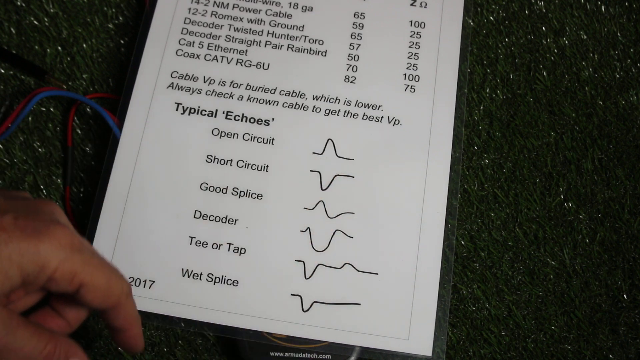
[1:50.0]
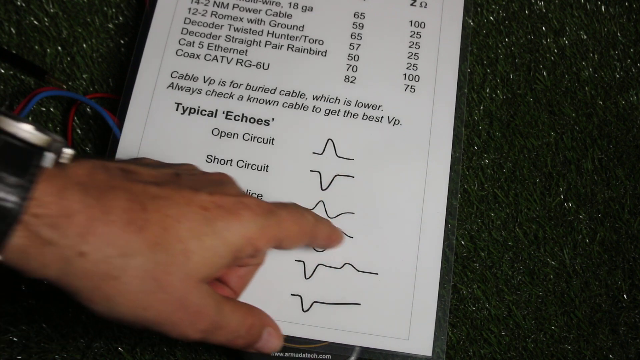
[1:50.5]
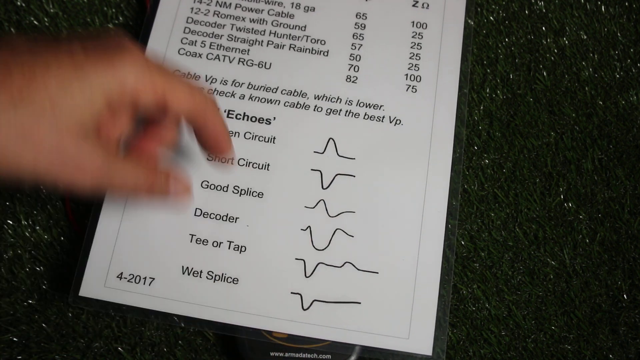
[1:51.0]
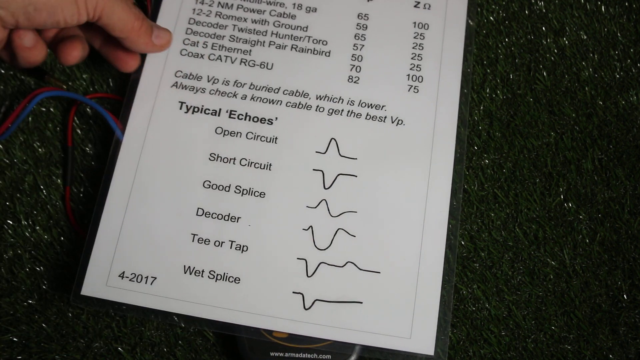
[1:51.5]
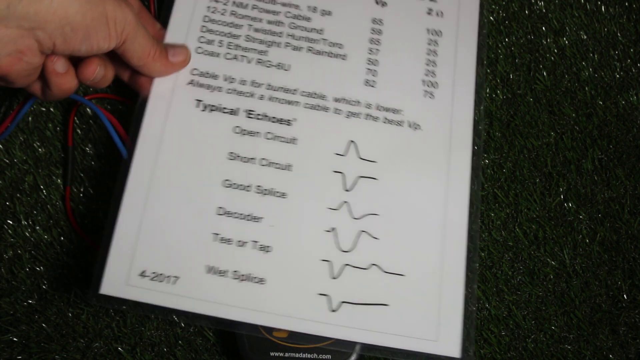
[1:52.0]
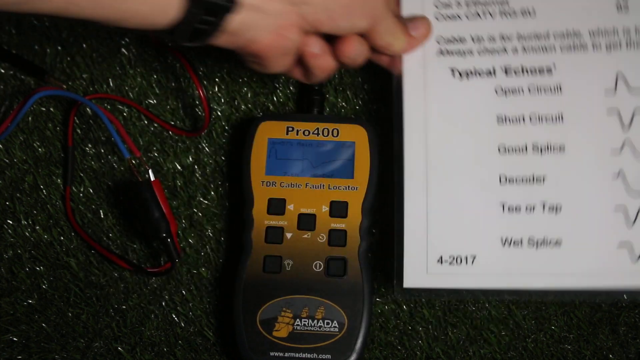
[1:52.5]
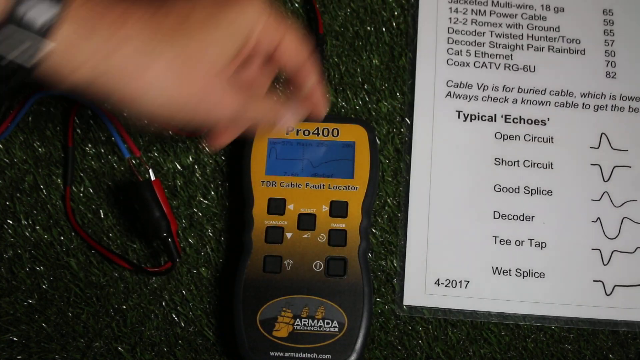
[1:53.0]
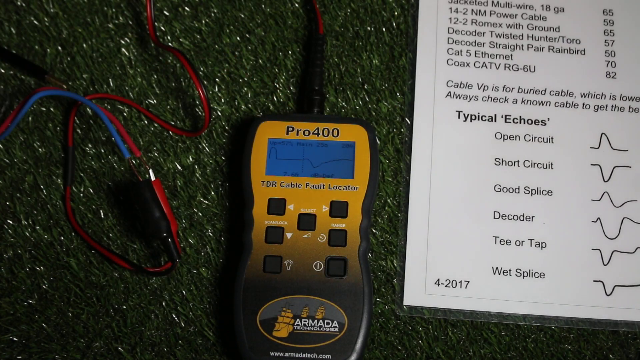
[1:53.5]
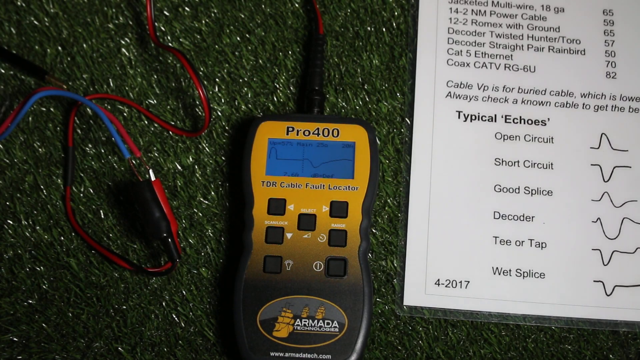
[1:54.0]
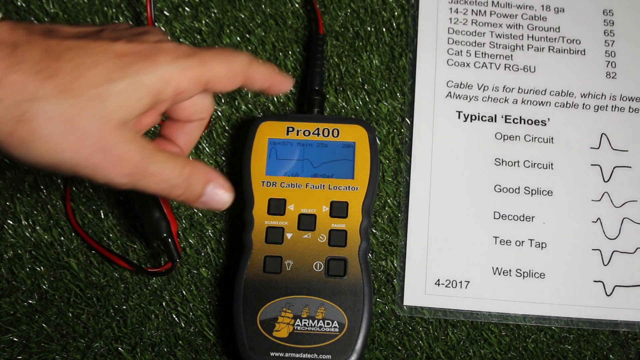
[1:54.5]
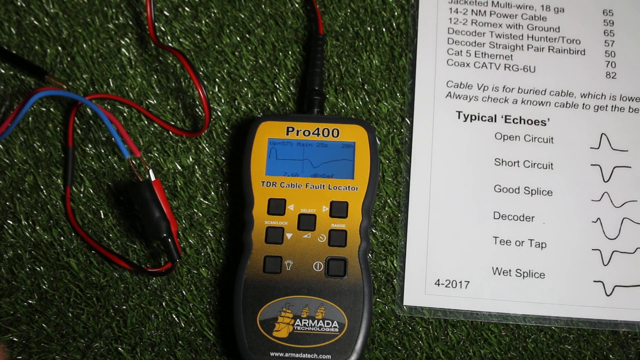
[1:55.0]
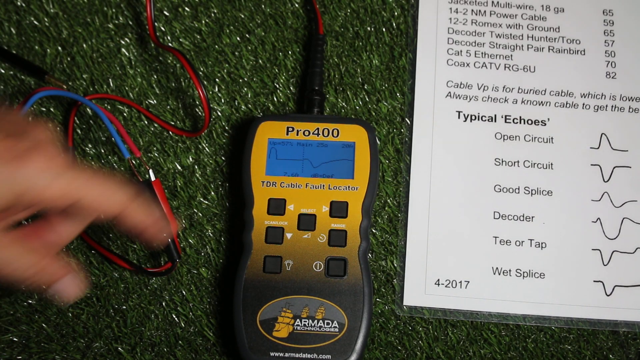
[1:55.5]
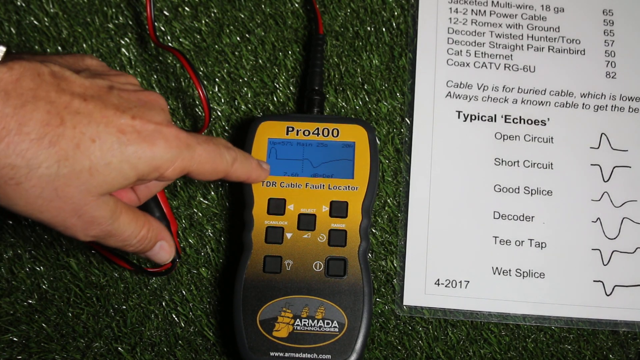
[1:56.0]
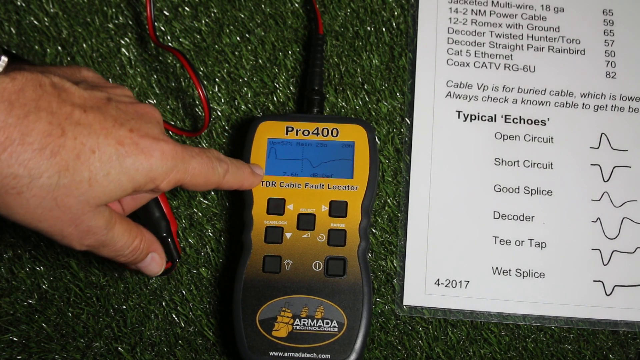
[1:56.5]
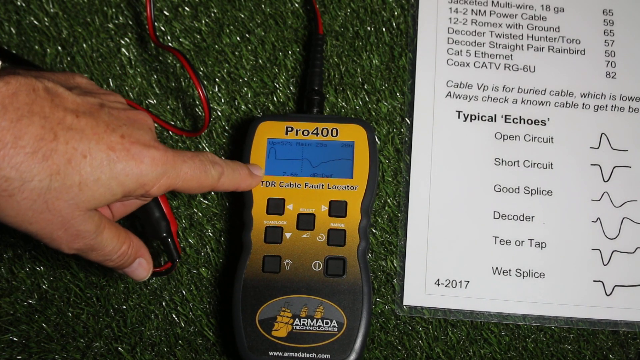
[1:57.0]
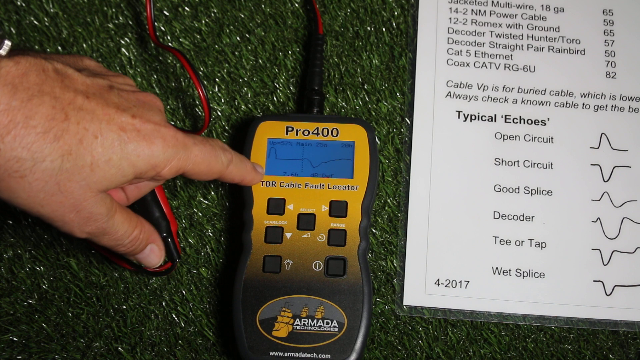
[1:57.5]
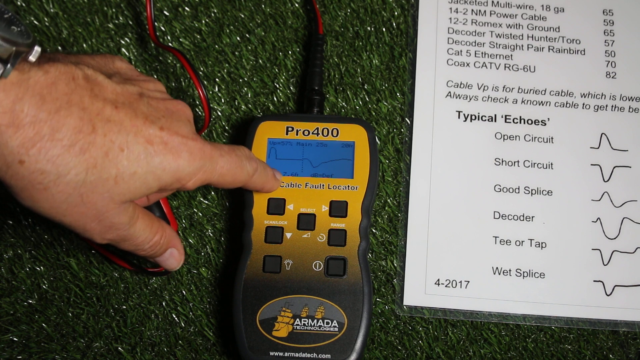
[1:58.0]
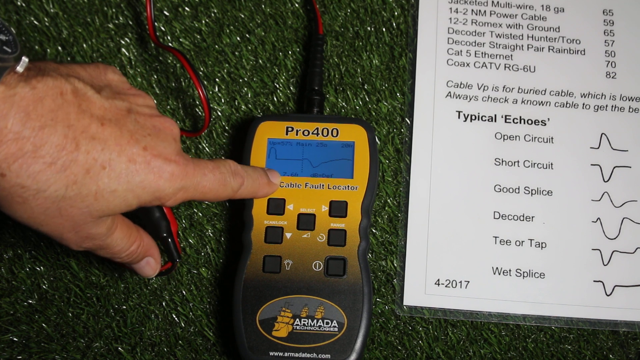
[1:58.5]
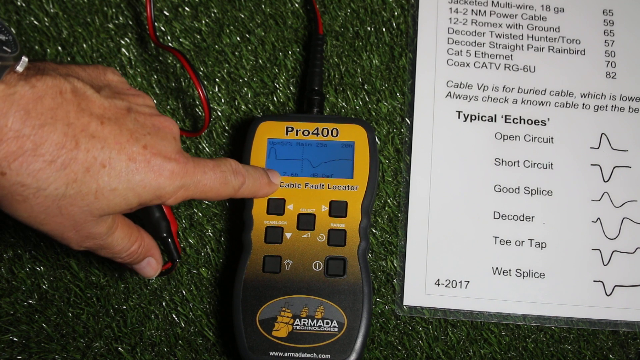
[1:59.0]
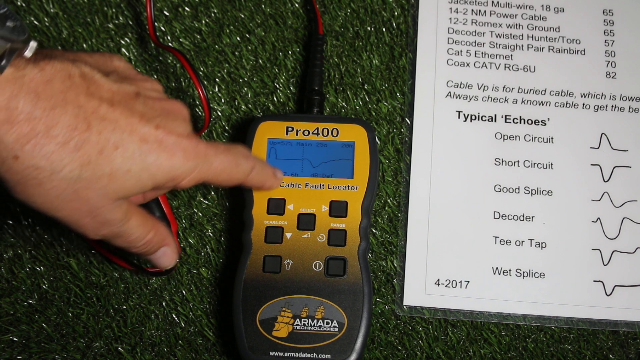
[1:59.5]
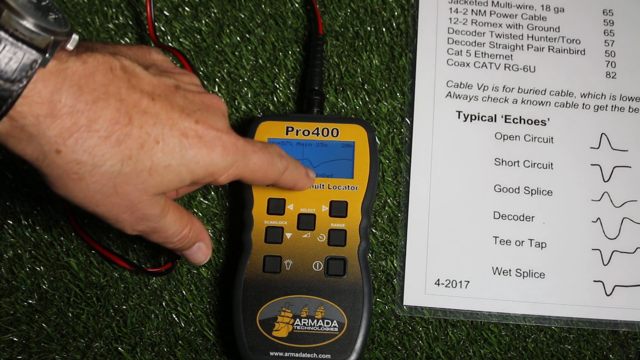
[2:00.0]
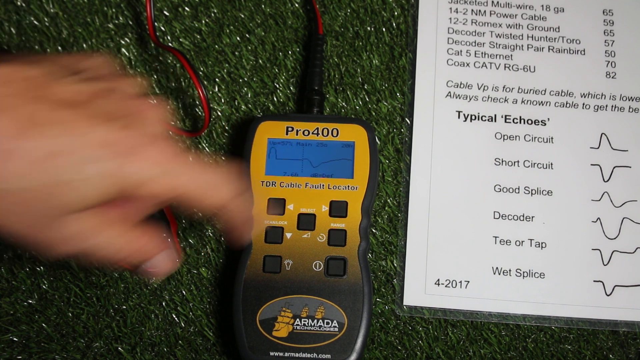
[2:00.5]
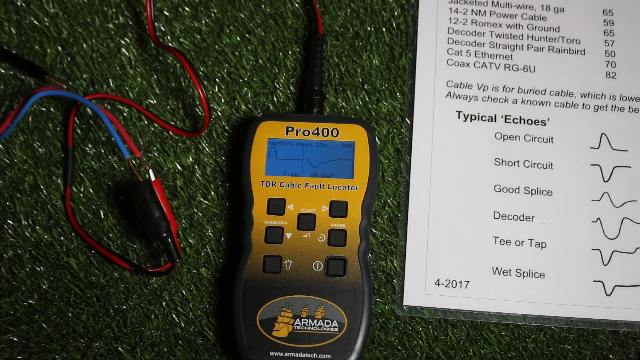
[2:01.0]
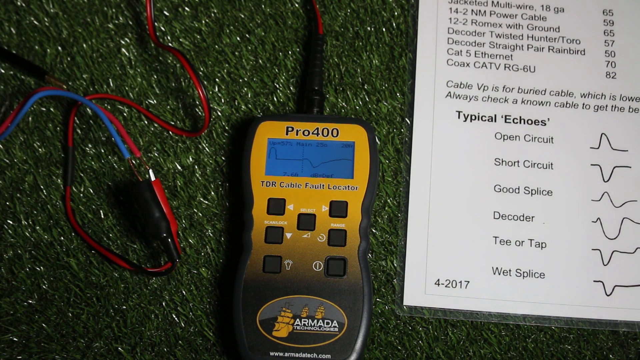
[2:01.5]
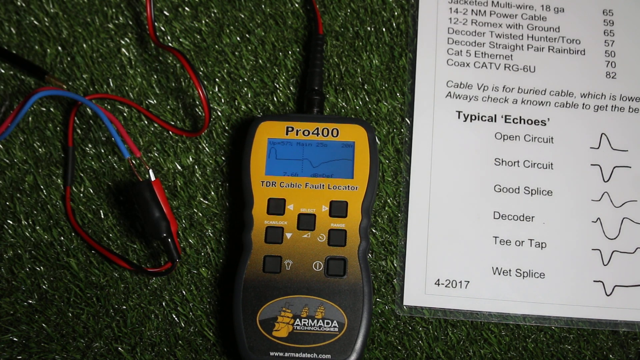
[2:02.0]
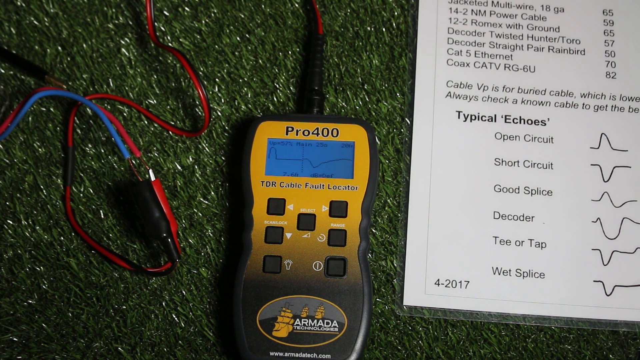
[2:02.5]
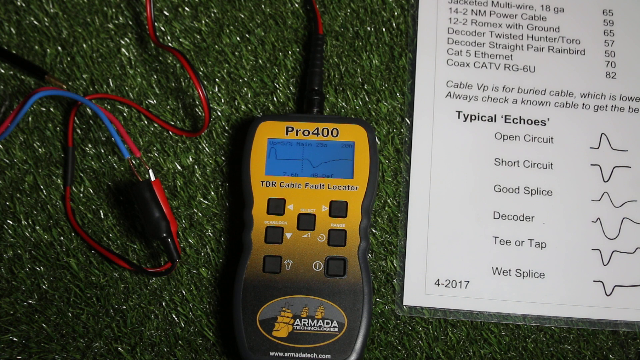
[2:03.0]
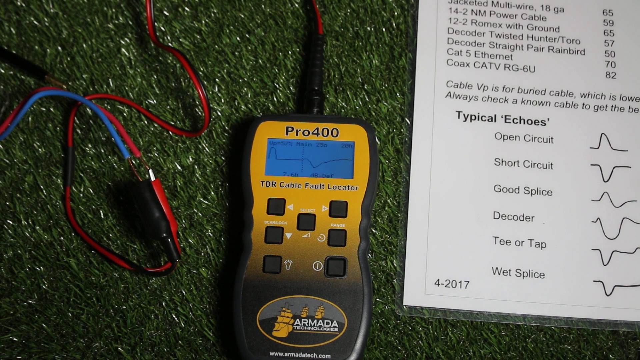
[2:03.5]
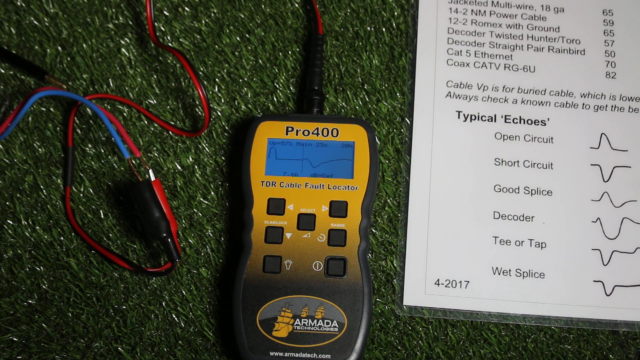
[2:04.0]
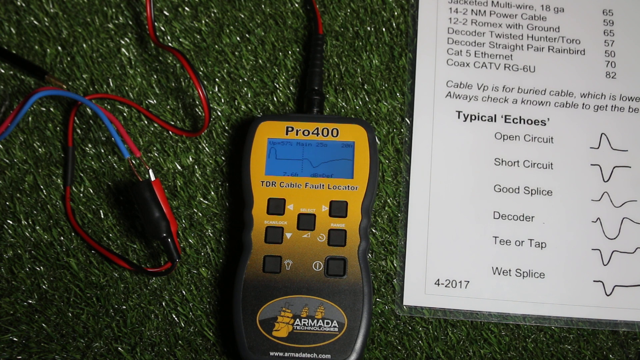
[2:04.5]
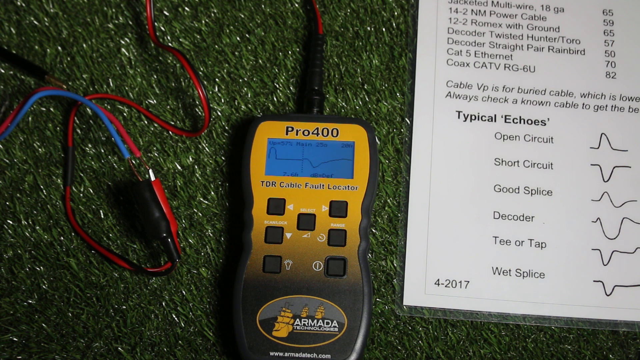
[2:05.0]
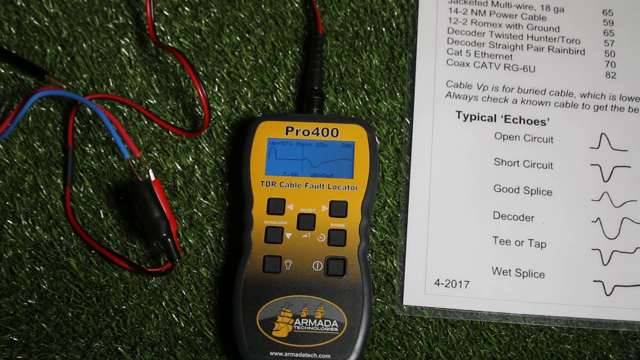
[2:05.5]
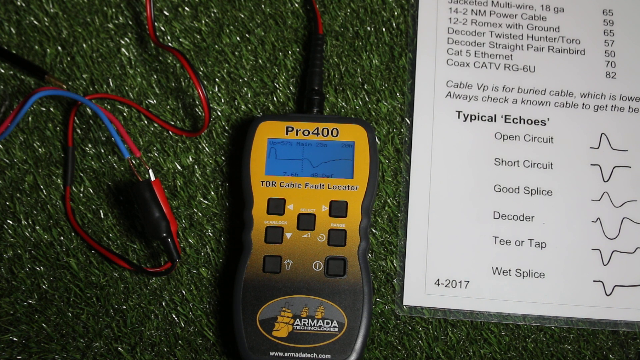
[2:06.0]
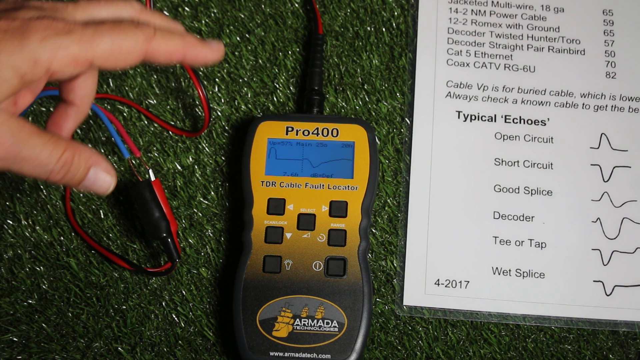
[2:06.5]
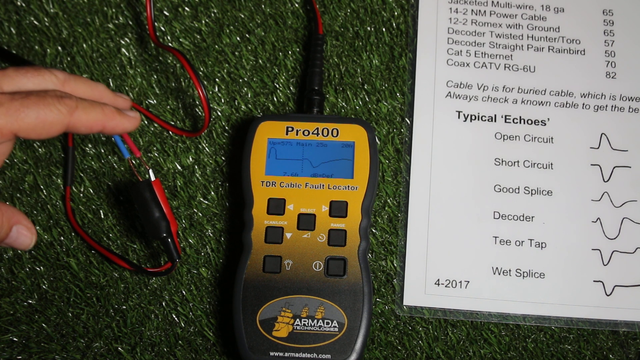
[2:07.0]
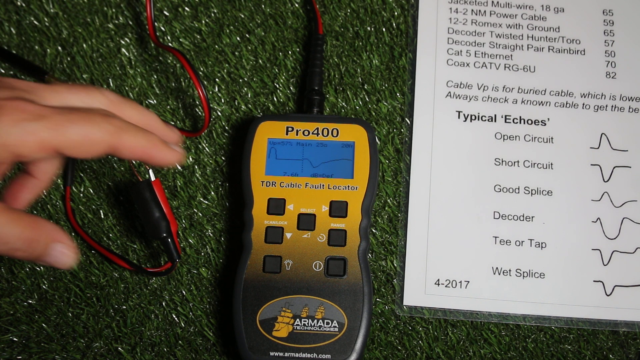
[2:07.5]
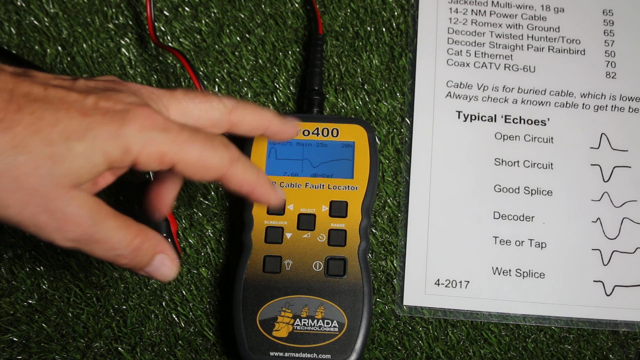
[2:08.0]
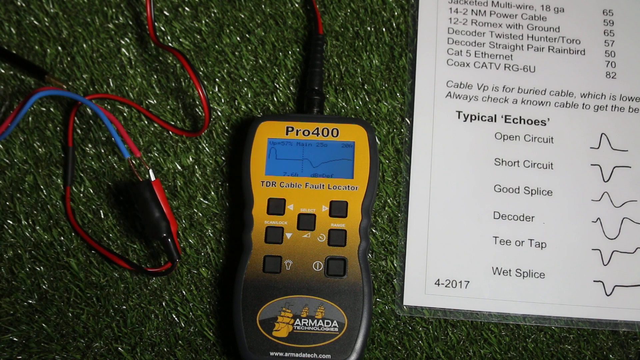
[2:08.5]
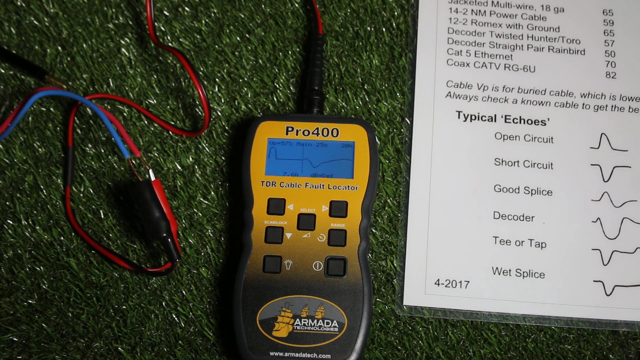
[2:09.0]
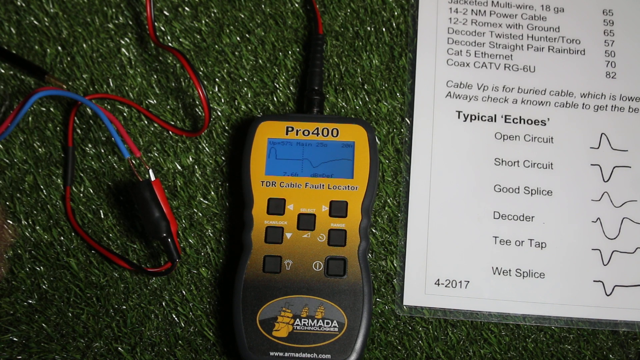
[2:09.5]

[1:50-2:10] A white piece of paper has information about typical echoes, such as "open circuit", "short circuit", "good splice", "decoder" and "tear, tap", and the last one is now visible: "wet splice". The Pro 400 device has an illuminated screen showing jagged lines. It says "Armada", and there is a big oval button at the bottom. A man's hand comes in and pushes buttons, getting the machine to work. He wears a black watch band and a big-faced watch. Wires are now connected to the device; they are mostly red, with a shorter blue wire attached to the red. The man's hand comes in several times from the left side as he continues to touch the yellow Pro 400 device.